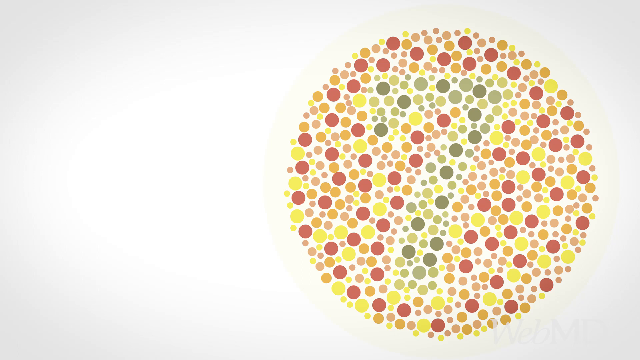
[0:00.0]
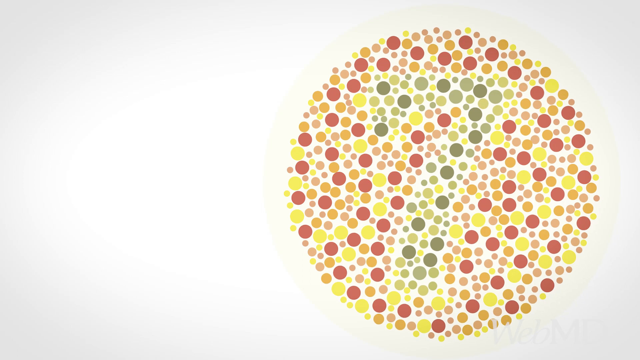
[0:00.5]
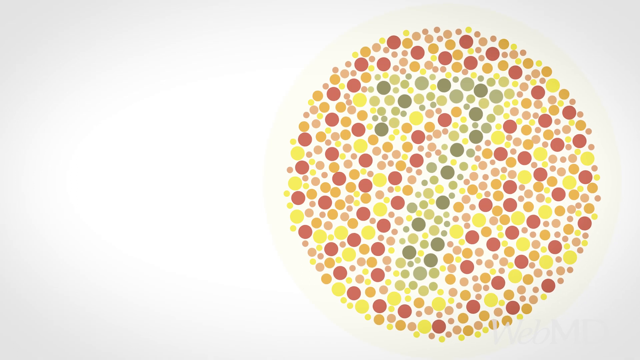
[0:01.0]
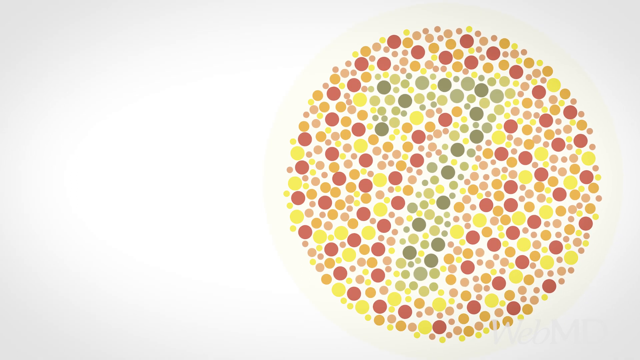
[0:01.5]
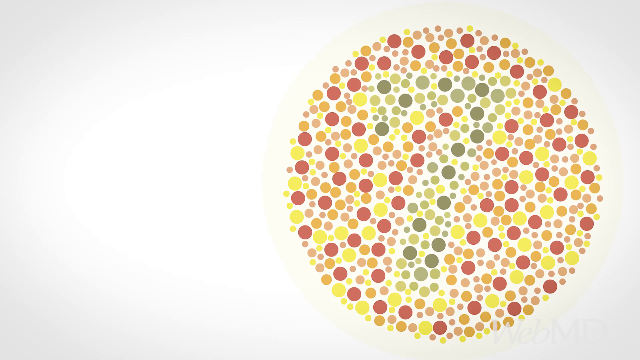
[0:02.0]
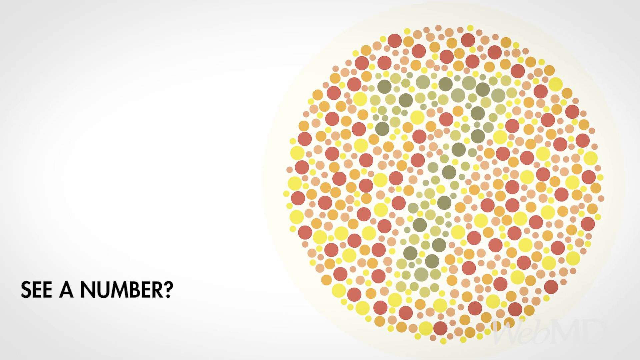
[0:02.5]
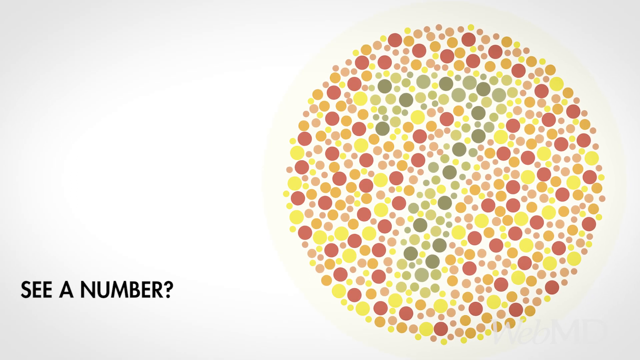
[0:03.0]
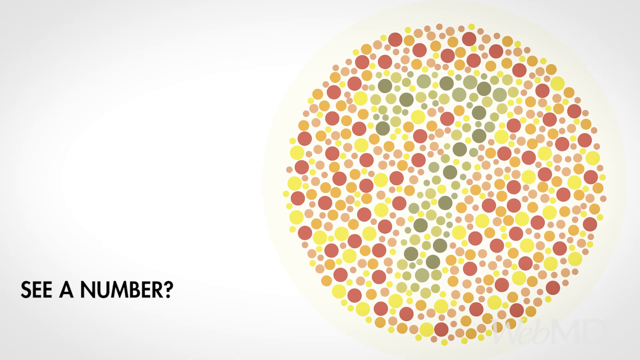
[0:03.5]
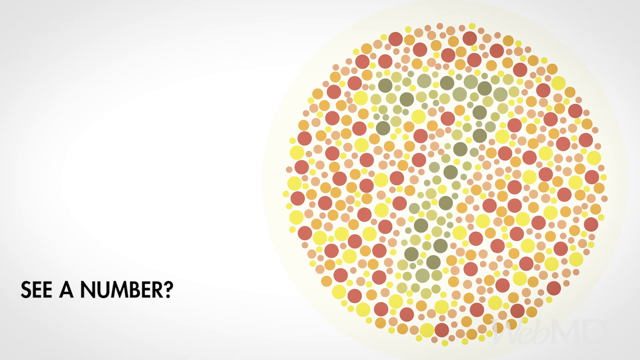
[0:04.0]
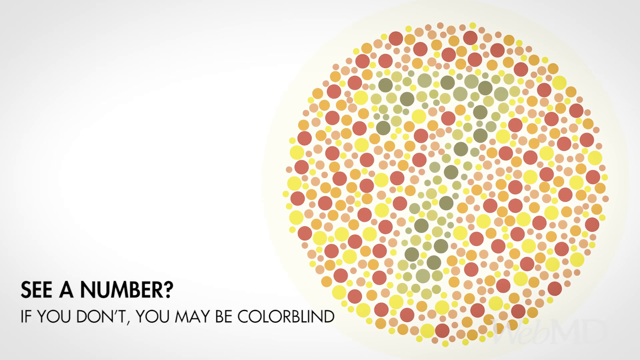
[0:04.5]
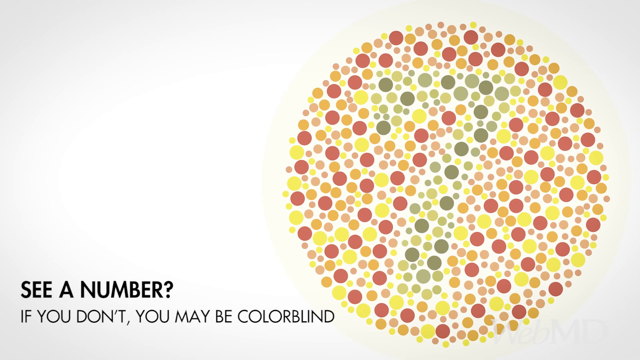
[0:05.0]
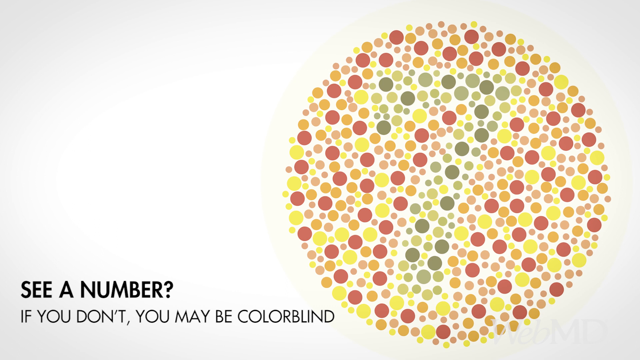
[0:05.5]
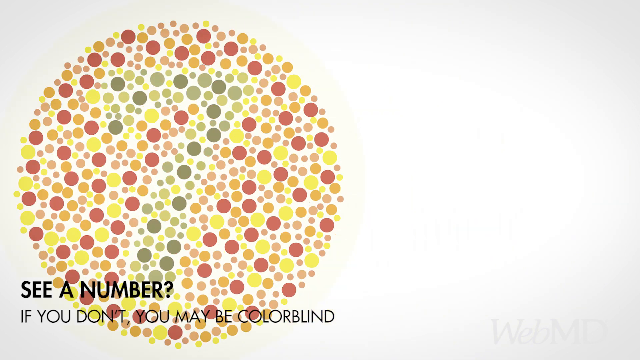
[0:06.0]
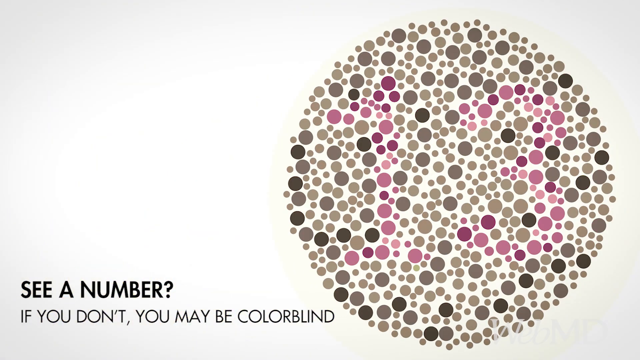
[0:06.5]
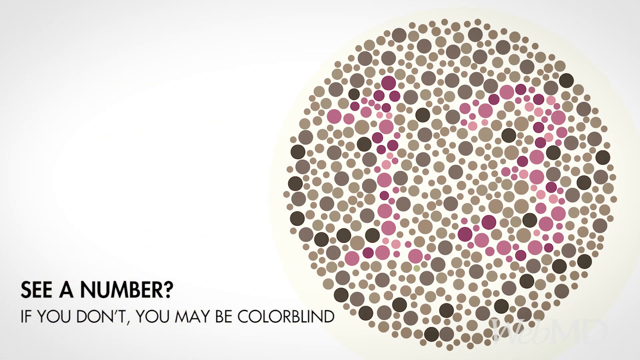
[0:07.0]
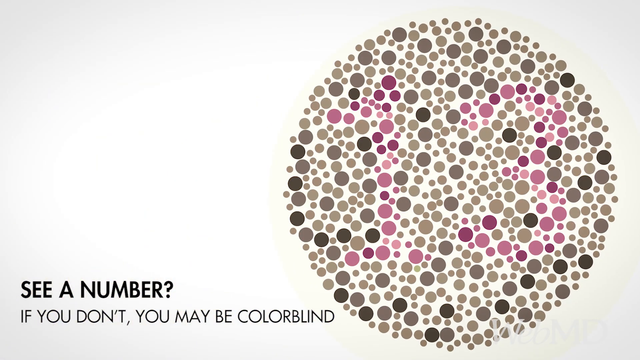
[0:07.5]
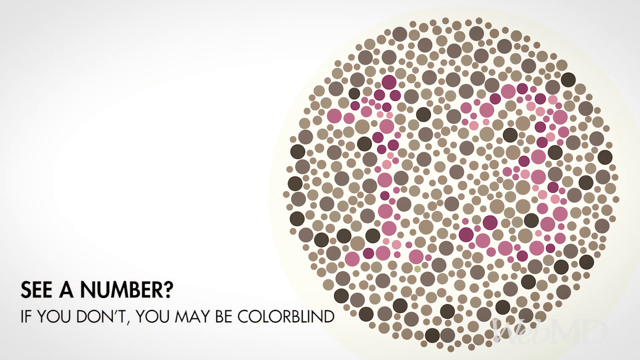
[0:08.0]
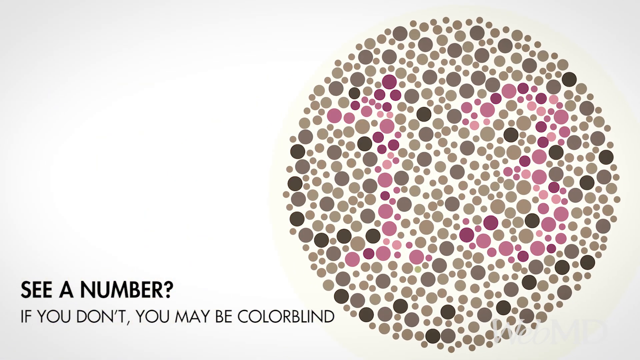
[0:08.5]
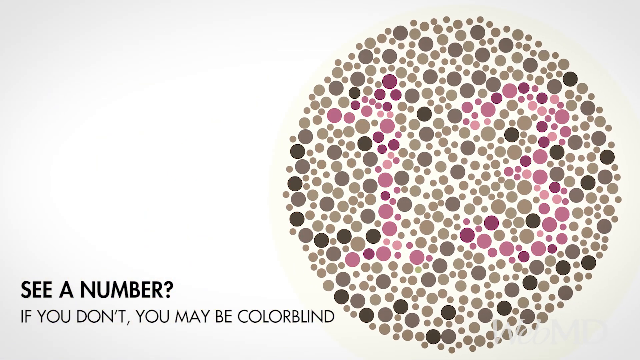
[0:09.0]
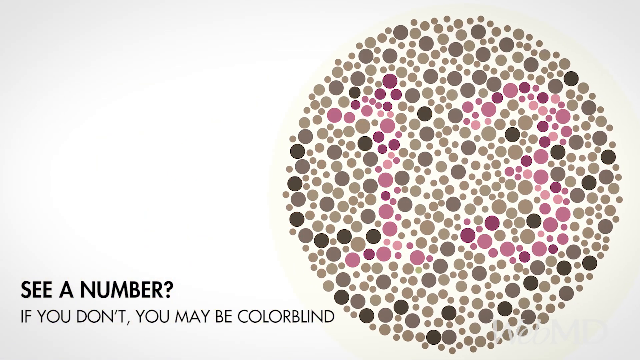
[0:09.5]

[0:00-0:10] A circle made up of many smaller circles appears on a white background; it appears to be the kind used in a color blindness test. Most of the small circles are orange, red and yellow, but dark green circles in the middle of the larger shape form the number seven. In the bottom left corner of the screen, the text "See a number?" appears in all-capital black font, and underneath it, in less bold black font, the words "if you don't, you may be colorblind." The circle is then replaced by a similar circle made up of smaller circles, but this time most of it is gray and black, and the number within it, 13, is made up of pink and purple circles.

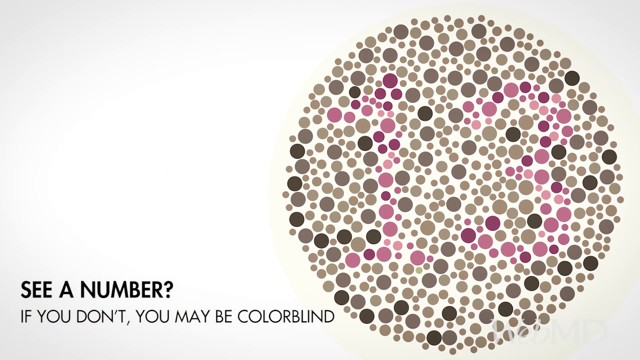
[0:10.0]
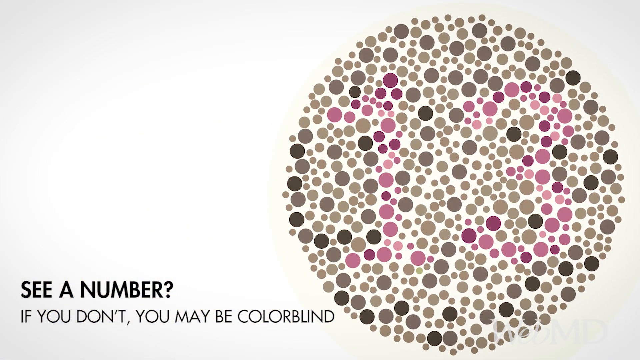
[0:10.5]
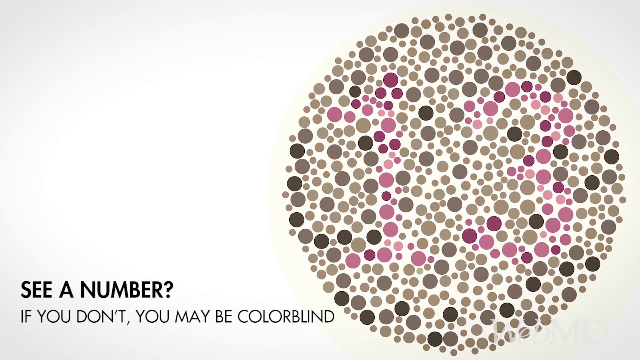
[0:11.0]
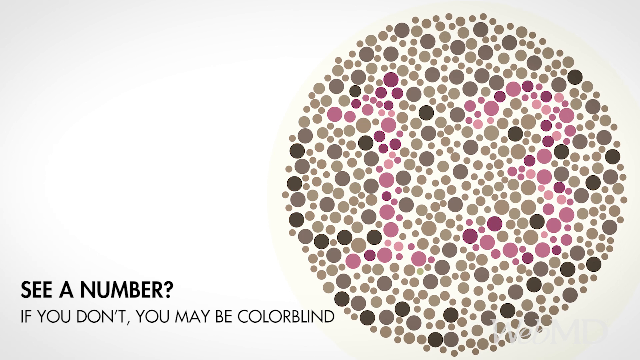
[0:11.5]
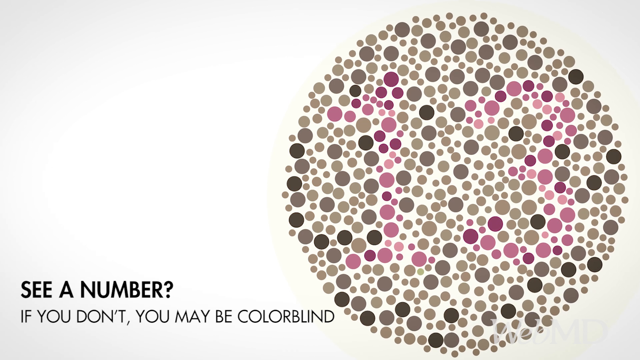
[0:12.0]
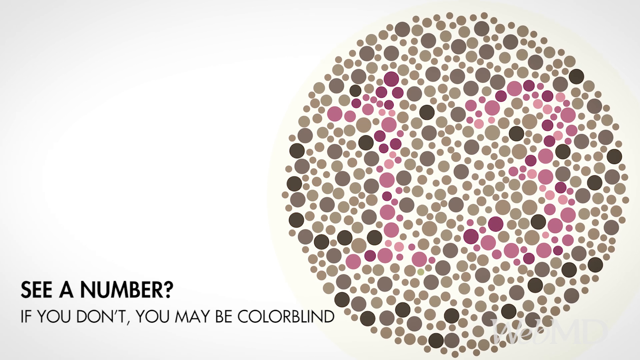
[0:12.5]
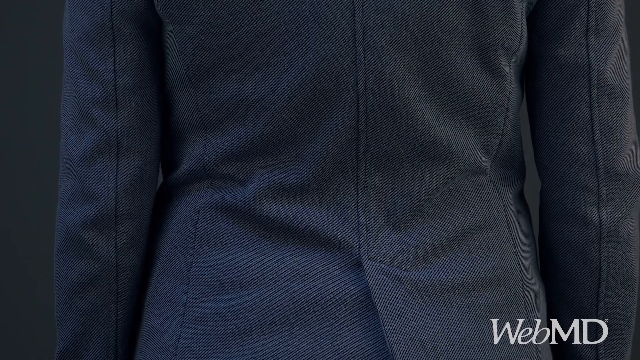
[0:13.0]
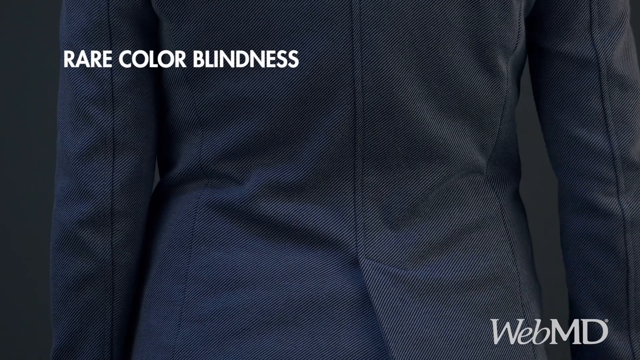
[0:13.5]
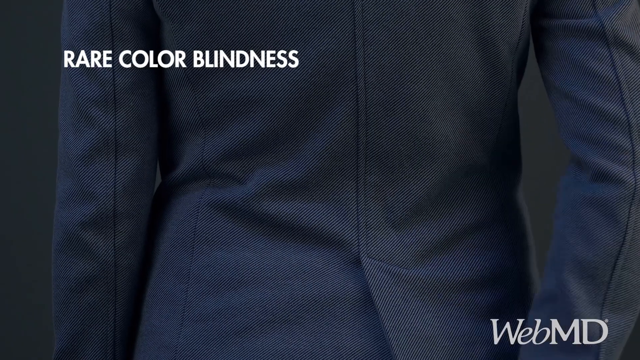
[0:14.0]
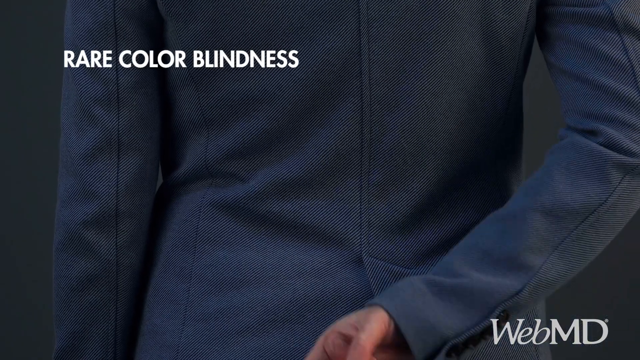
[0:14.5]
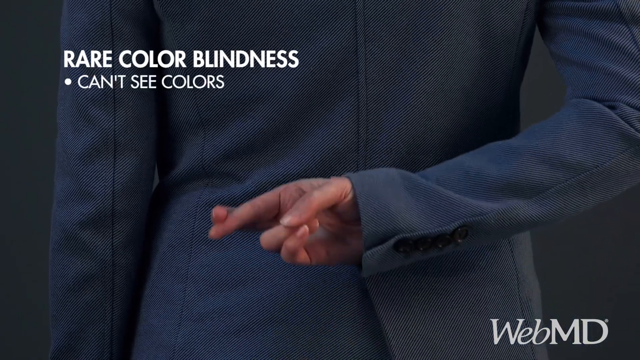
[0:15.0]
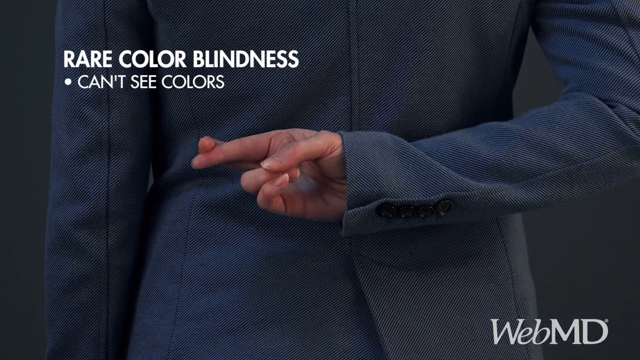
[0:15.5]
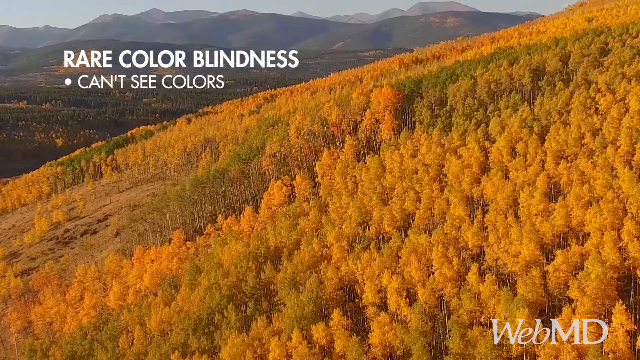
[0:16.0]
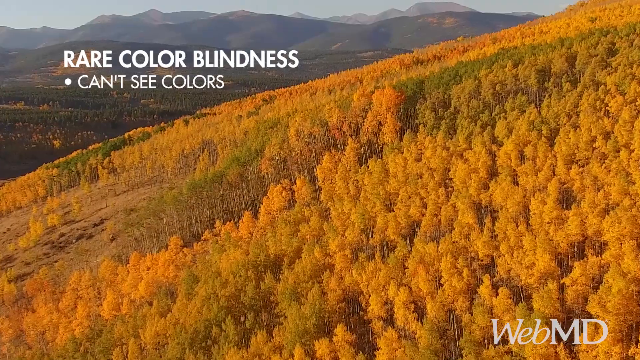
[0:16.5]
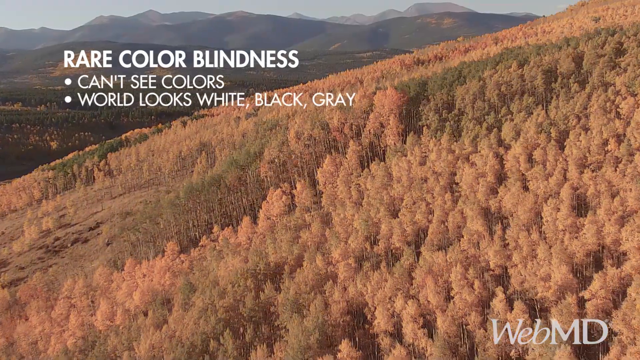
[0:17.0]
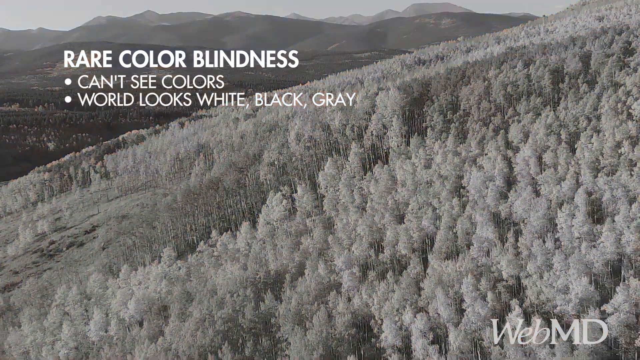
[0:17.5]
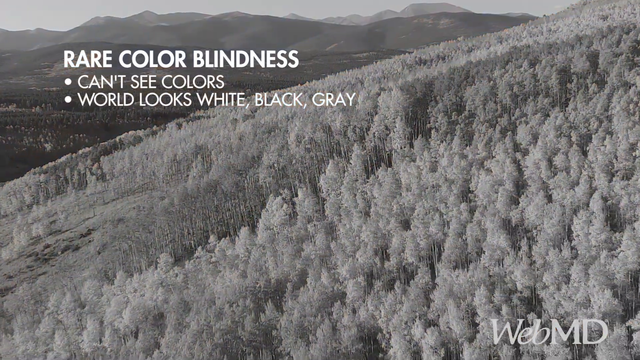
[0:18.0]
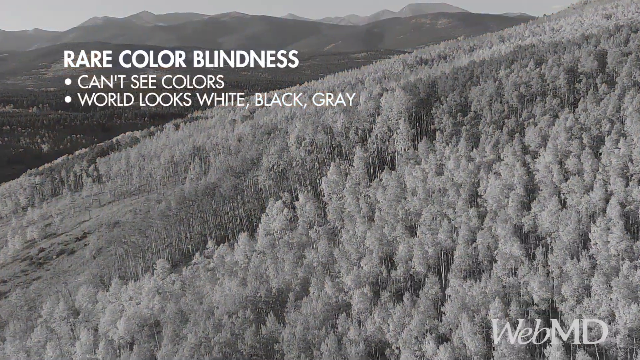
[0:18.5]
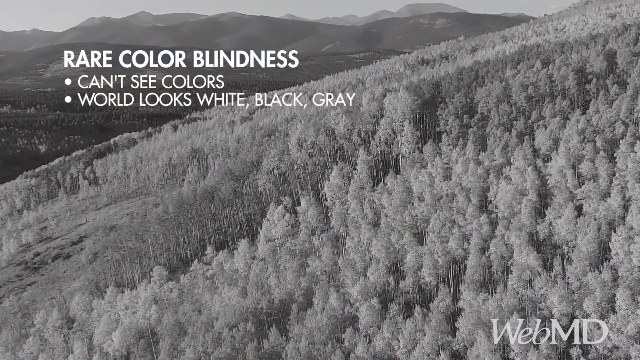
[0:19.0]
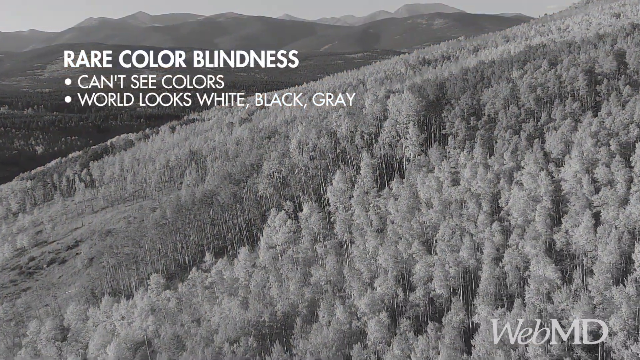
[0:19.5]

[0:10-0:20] The circle is still on screen, and then the video suddenly cuts to what appears to be someone's back. The person wears a suit jacket in an almost navy blue colour with a very subtle, kind of diagonal stripe pattern in the fabric running downwards to the left, and is standing in front of a black canvas or background of some sort. The WebMD logo is in white in the bottom right corner, and in the top left the words "RARE COLOURBLINDNESS" appear in bold capitals. The person, seen from behind, raises their right arm at a kind of right angle across their back with their fingers crossed; the person is African American or black. Underneath the "RARE COLOURBLINDNESS" text, separate bullet points appear in non-bold text: "CAN'T SEE COLOURS" and "WORLD LOOKS WHITE, BLACK, GREY." A kind of forest or meadow then appears, with the camera going over it from above, almost like a drone shot, and hills in the background.